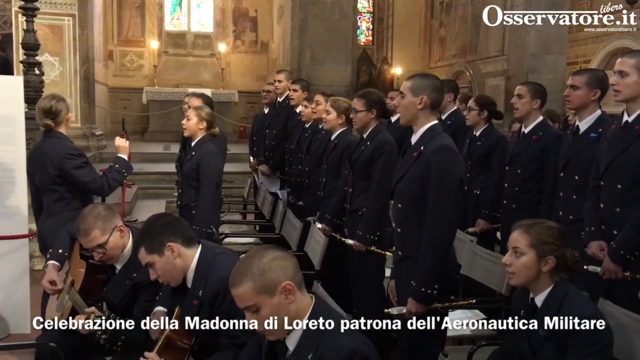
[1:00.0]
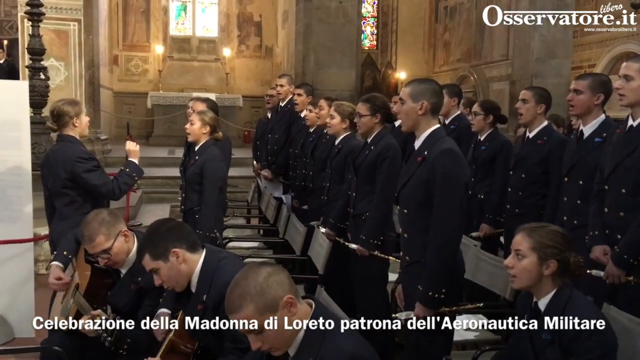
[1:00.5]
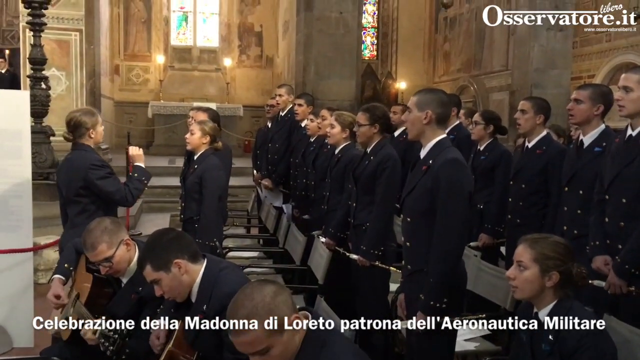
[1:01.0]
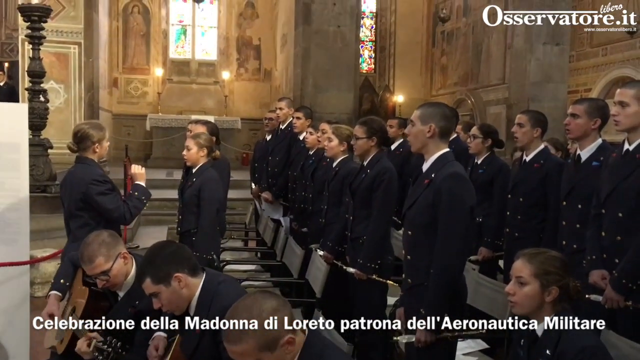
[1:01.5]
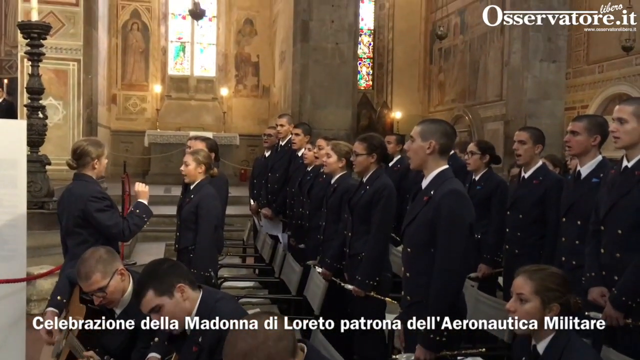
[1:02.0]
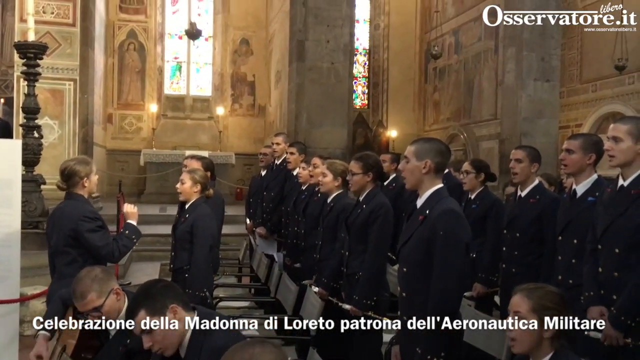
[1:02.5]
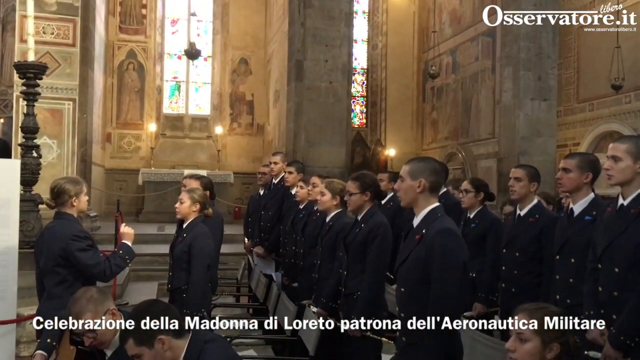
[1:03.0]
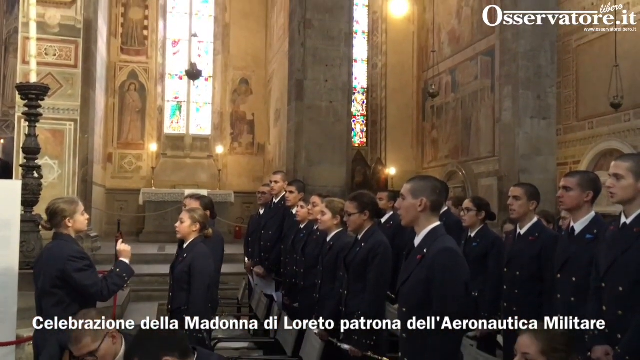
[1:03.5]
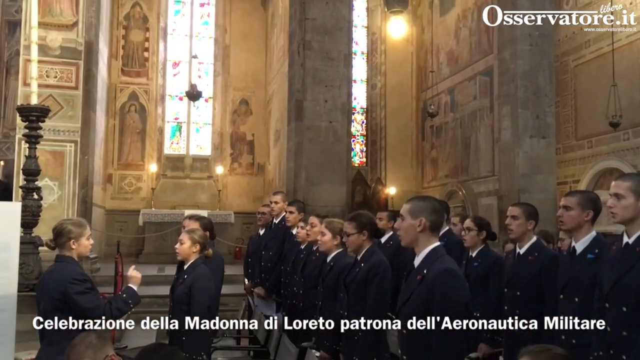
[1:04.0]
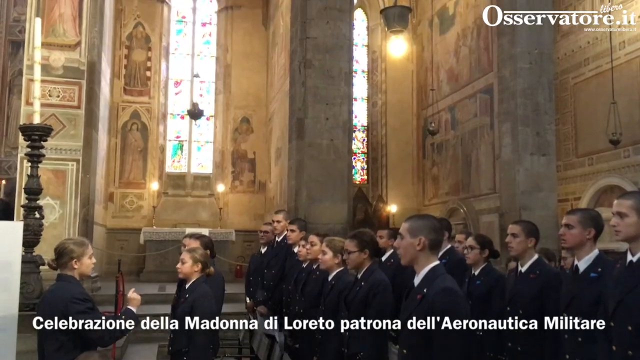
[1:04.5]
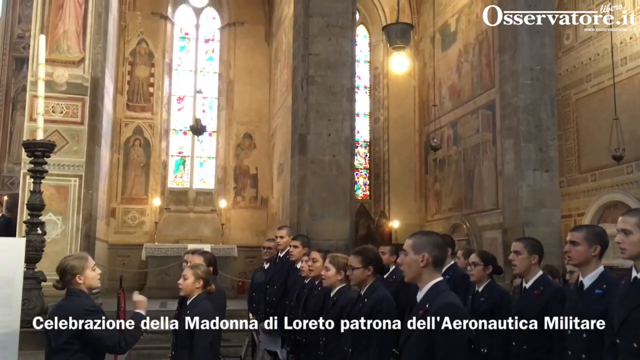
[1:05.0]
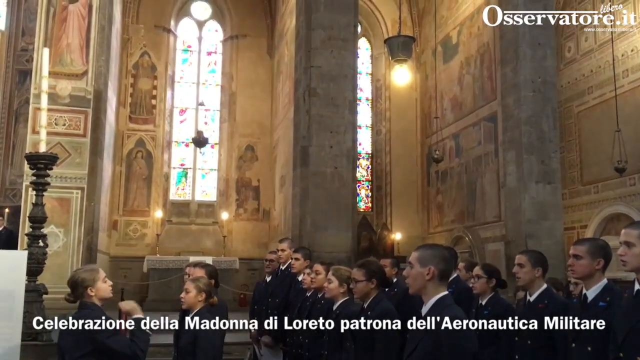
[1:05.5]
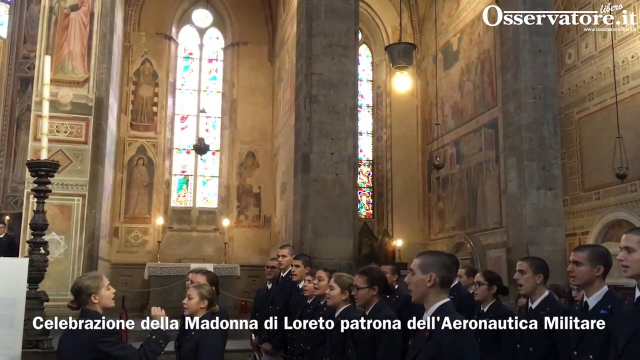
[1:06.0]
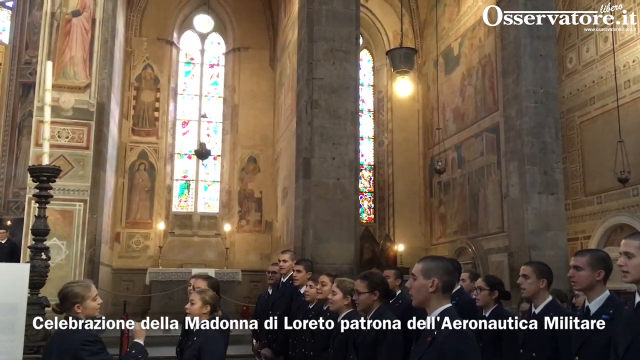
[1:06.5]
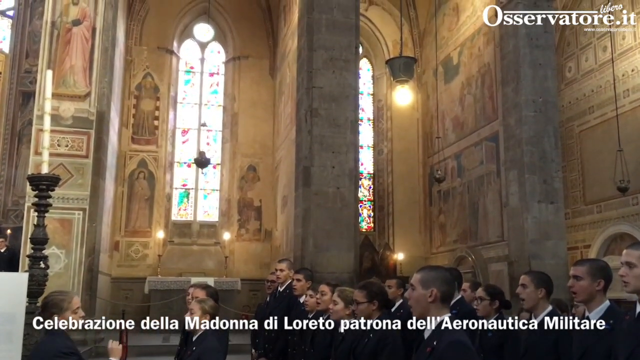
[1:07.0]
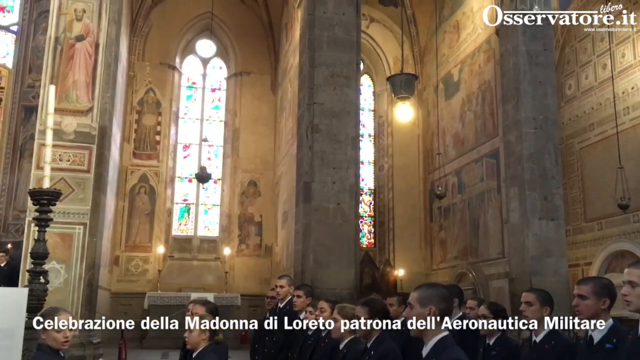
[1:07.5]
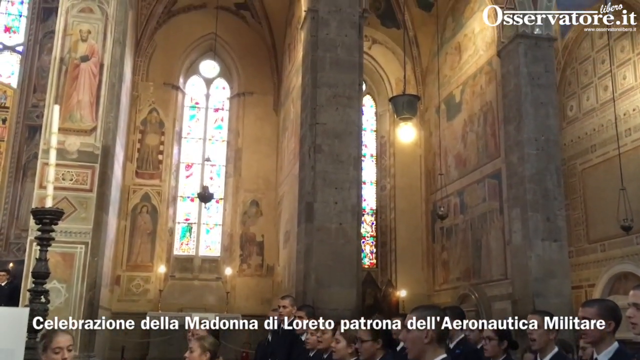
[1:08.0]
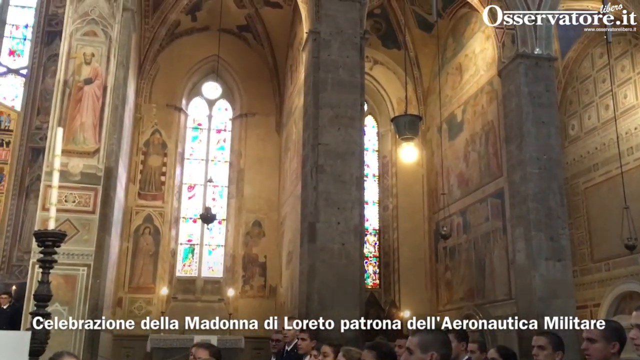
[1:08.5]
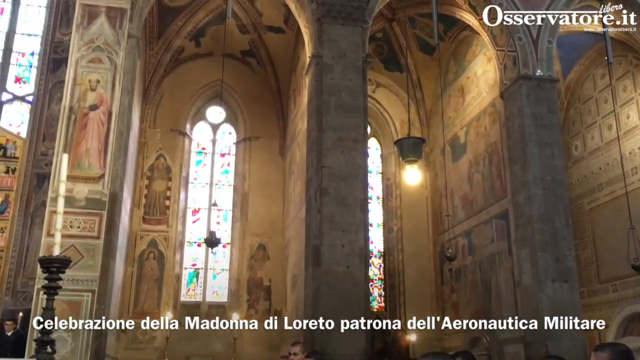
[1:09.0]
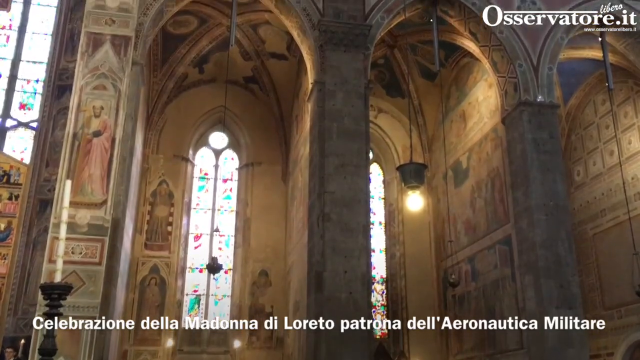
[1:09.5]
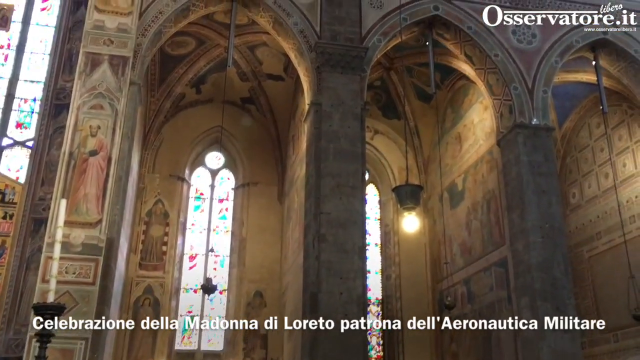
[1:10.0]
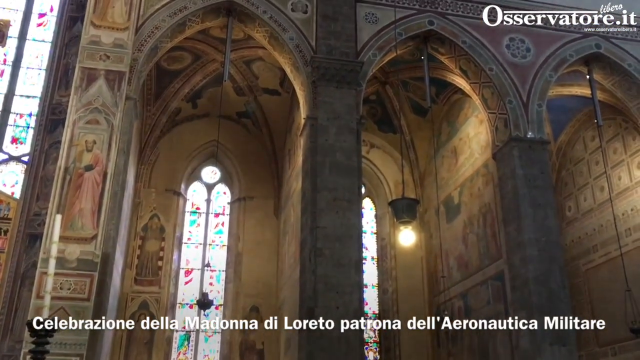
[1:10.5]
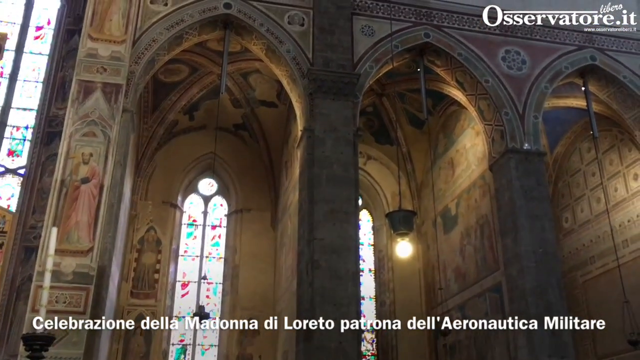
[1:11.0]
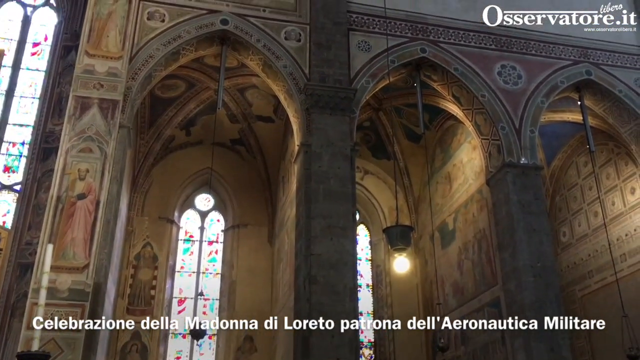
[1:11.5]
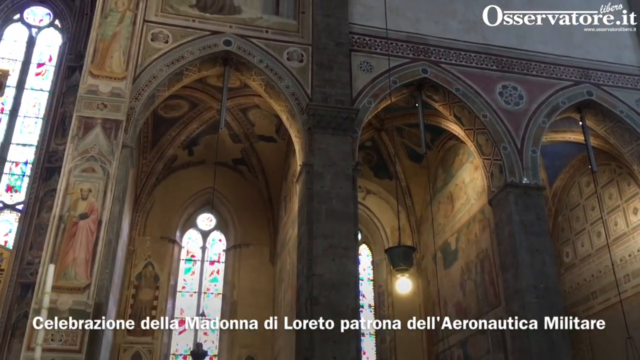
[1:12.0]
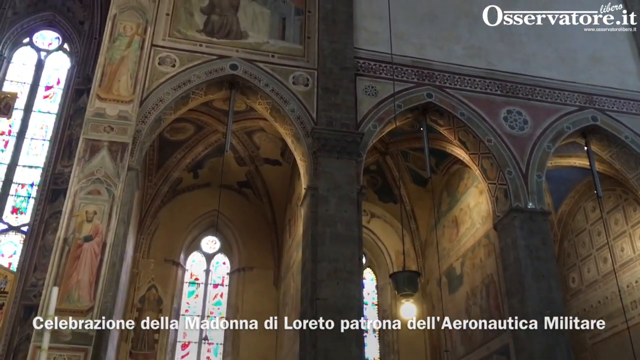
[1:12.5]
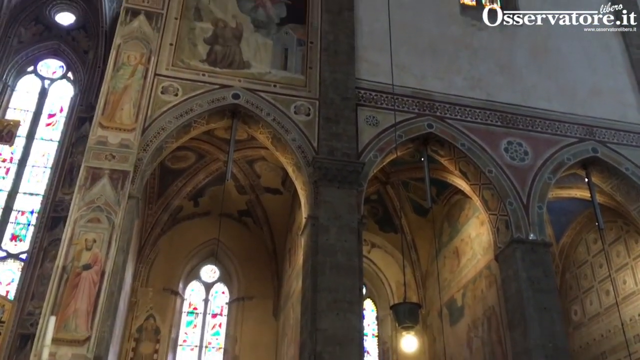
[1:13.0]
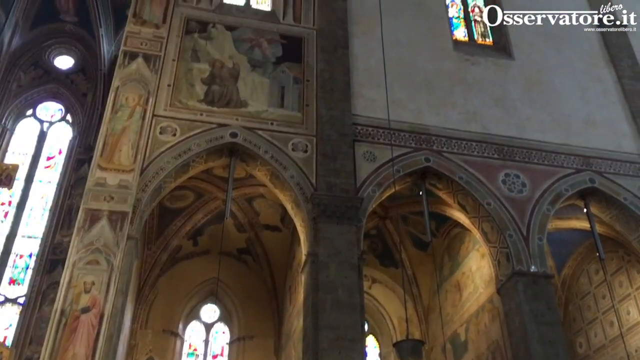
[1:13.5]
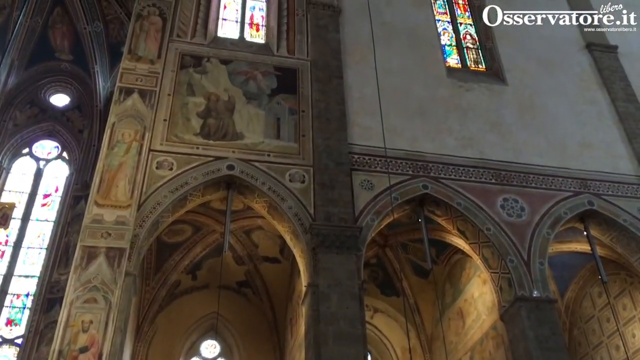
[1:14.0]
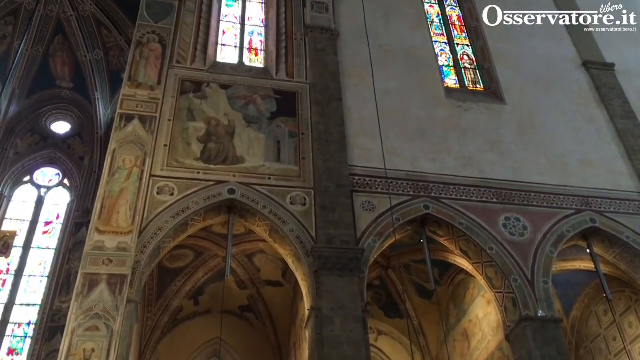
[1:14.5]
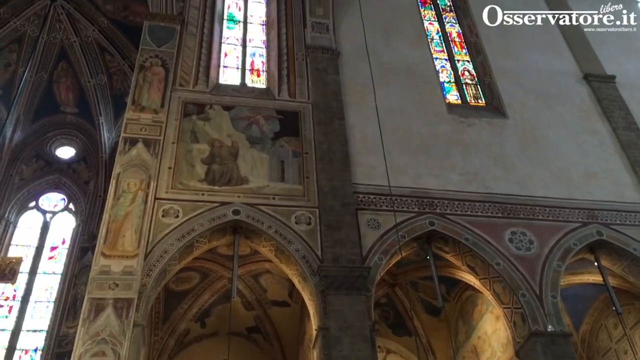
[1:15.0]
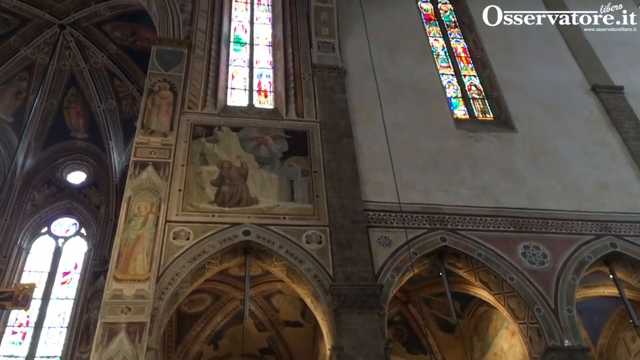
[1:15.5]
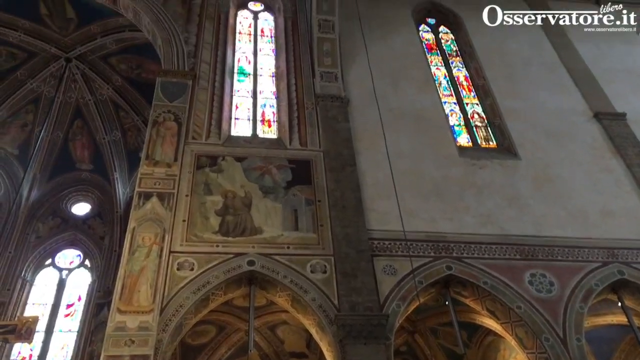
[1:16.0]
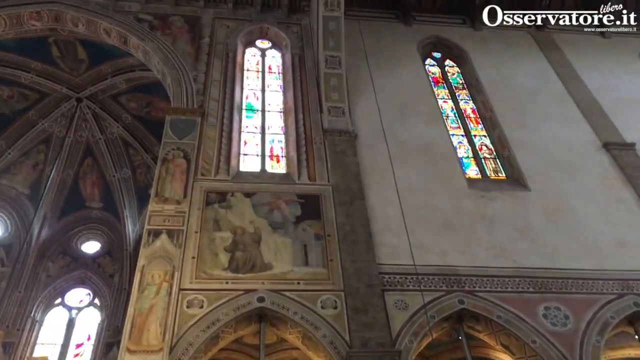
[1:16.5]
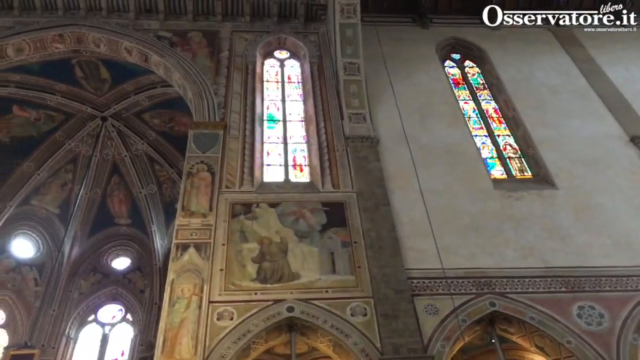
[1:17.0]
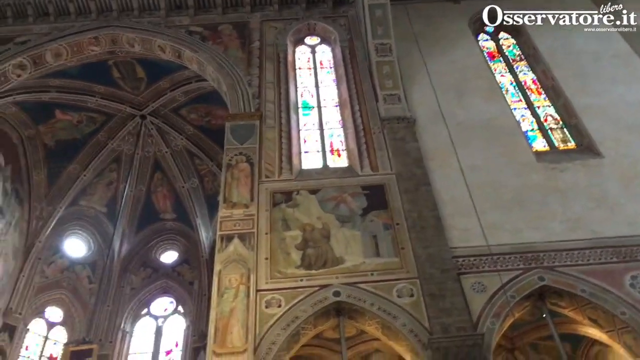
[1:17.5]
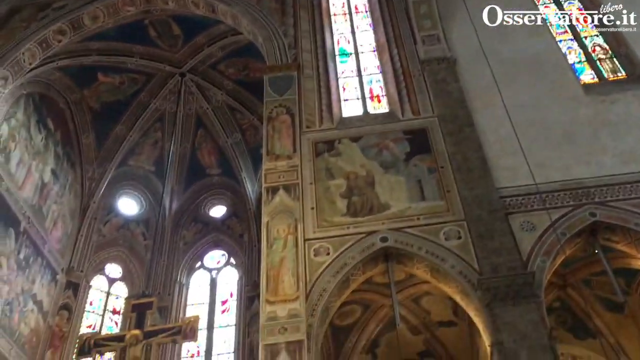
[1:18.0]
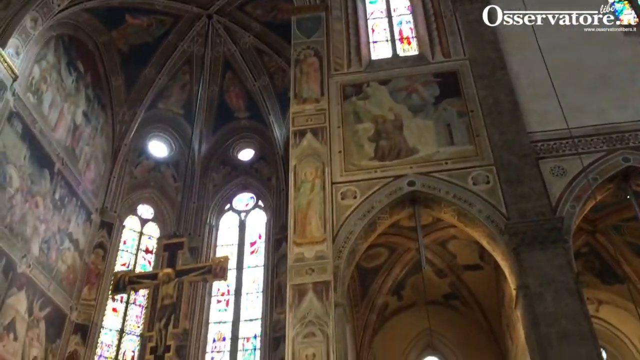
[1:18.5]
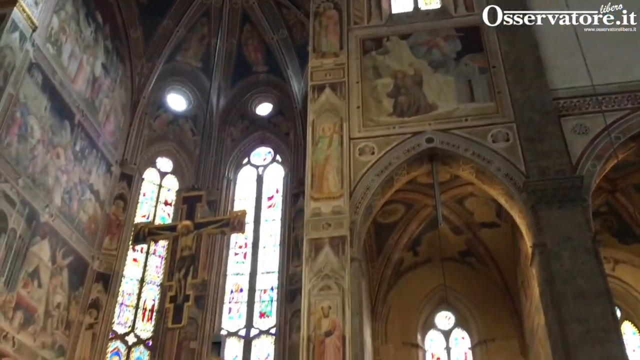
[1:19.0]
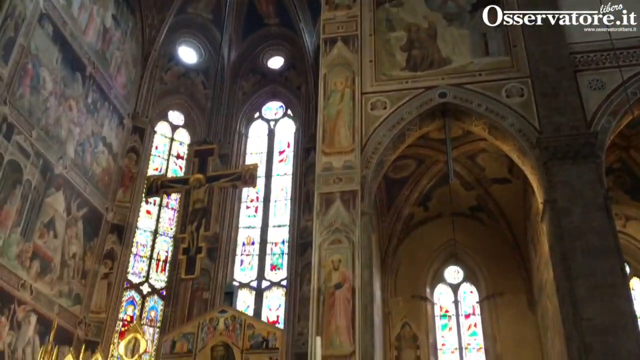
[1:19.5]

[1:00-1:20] Another view of the choir shows the director directing them and making hand gestures as they sing. The camera zooms up to the cathedral's ceilings, showing detailed architecture and etched glass in various colors. Given the captions, the setting may be in Italy. The camera pans upward from the choir to show more of the architecture and decor inside the church. The ceilings look finely detailed, and it is not easy to make out what the colored glass is inscribed with. The choir almost seems secondary in this scene, with the focus more on the cathedral, its lighting and general atmosphere.